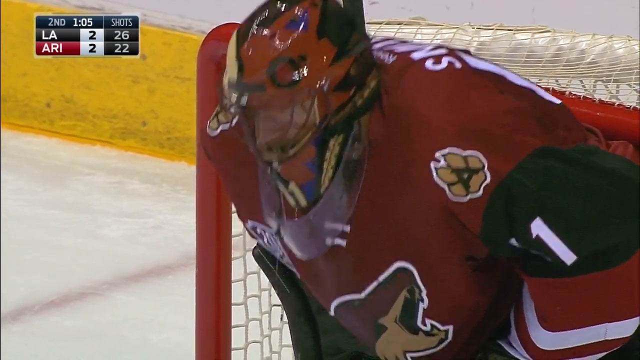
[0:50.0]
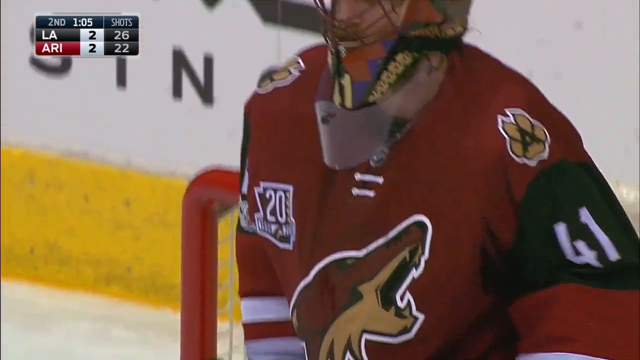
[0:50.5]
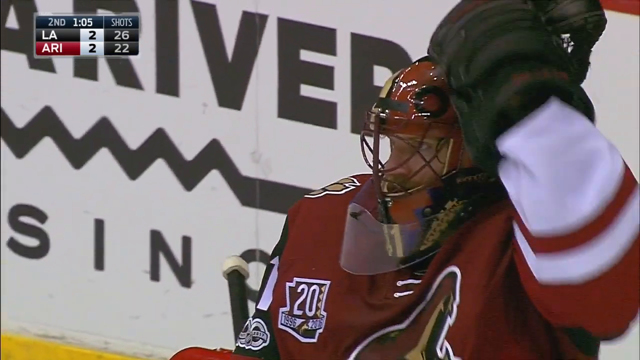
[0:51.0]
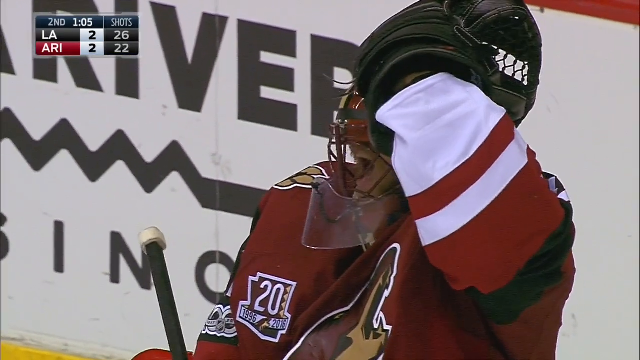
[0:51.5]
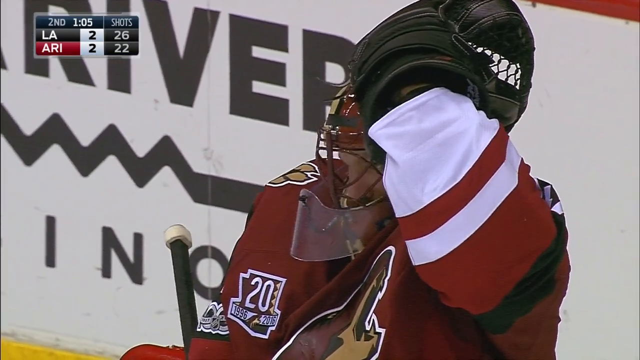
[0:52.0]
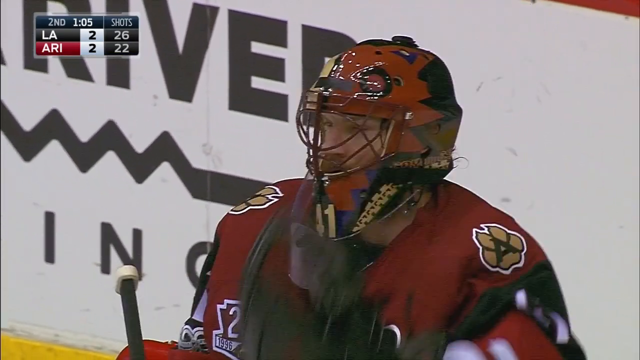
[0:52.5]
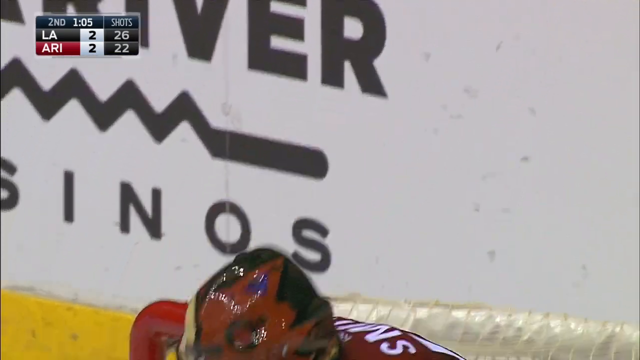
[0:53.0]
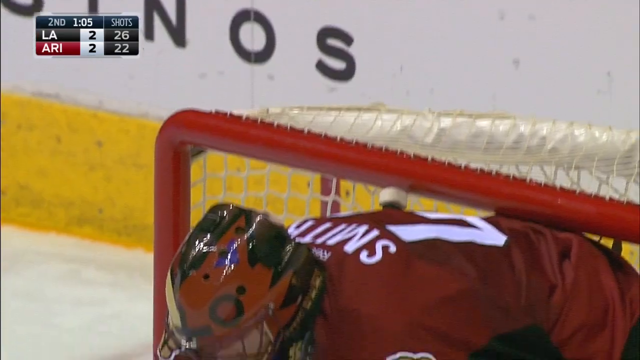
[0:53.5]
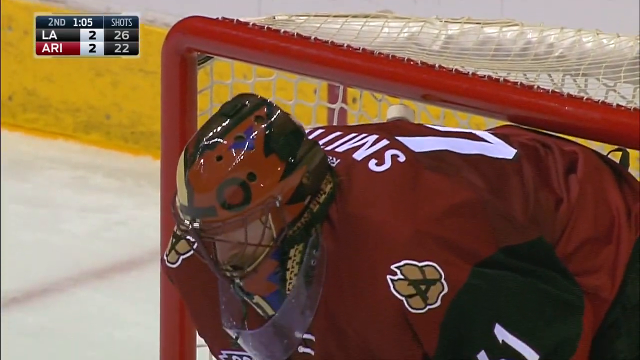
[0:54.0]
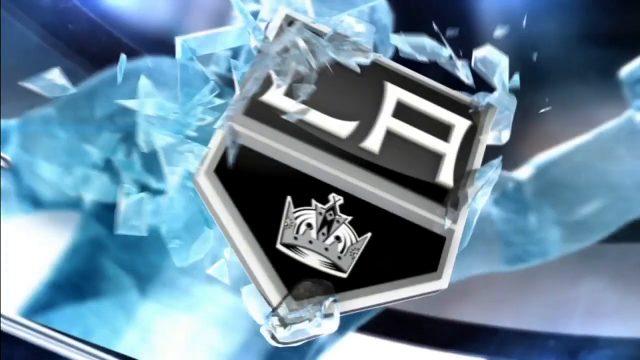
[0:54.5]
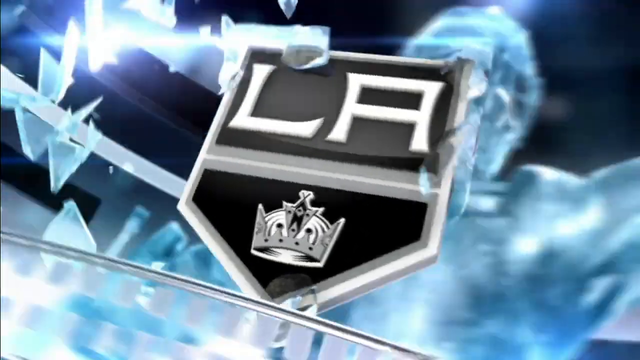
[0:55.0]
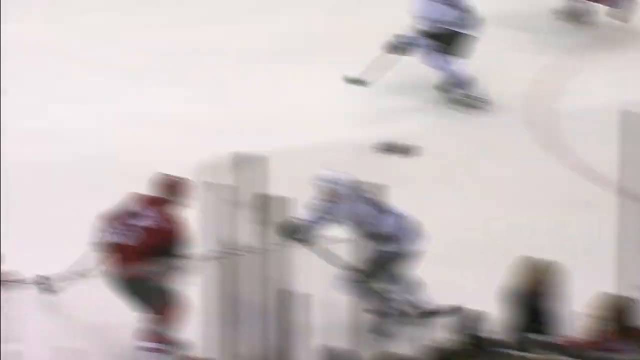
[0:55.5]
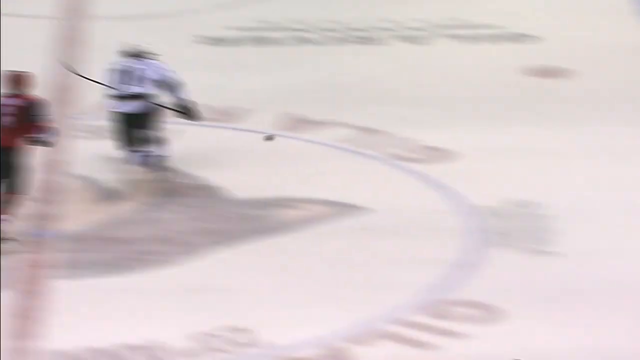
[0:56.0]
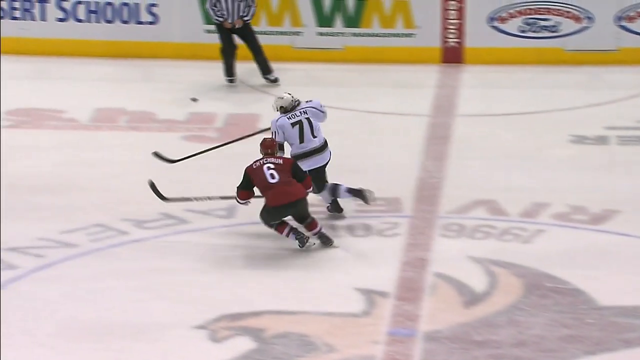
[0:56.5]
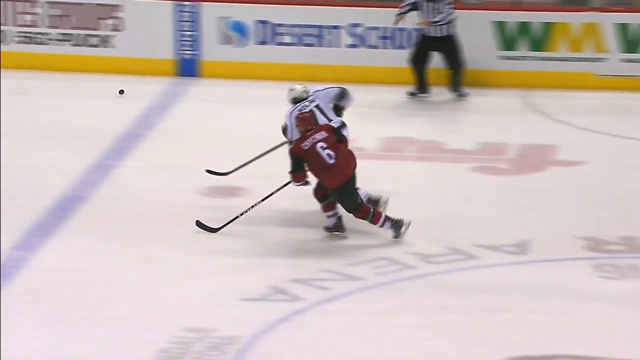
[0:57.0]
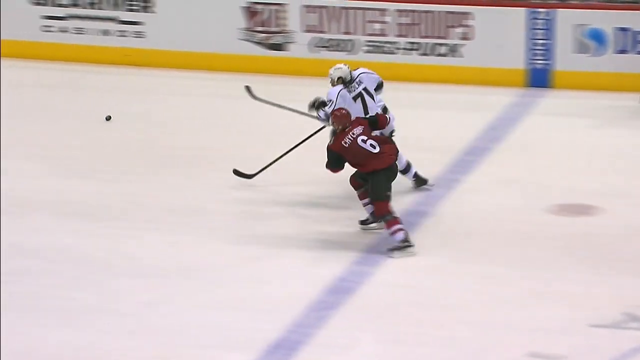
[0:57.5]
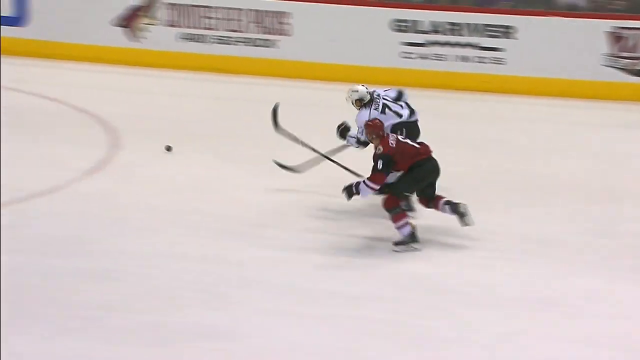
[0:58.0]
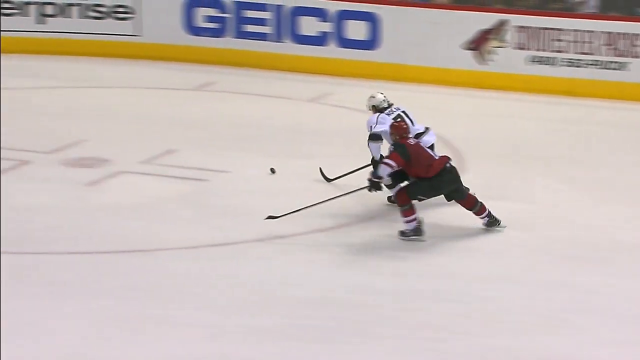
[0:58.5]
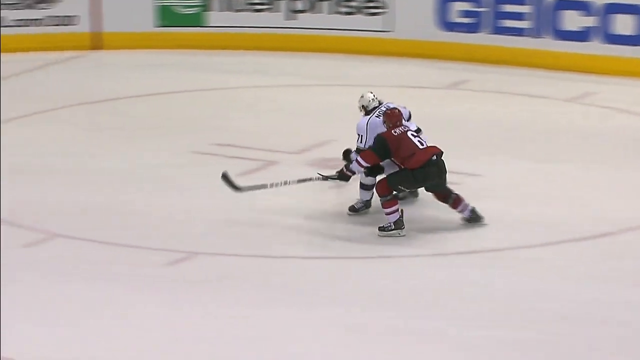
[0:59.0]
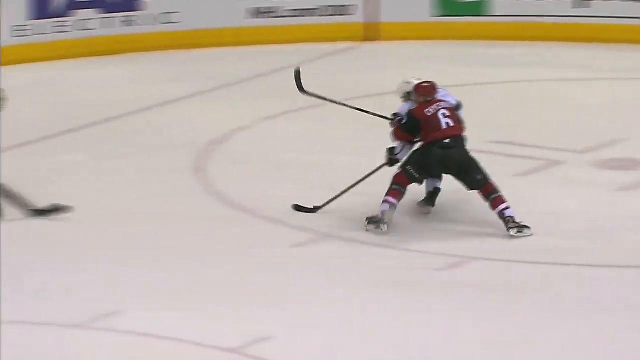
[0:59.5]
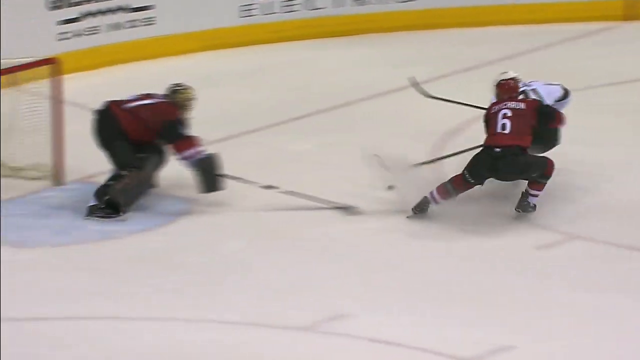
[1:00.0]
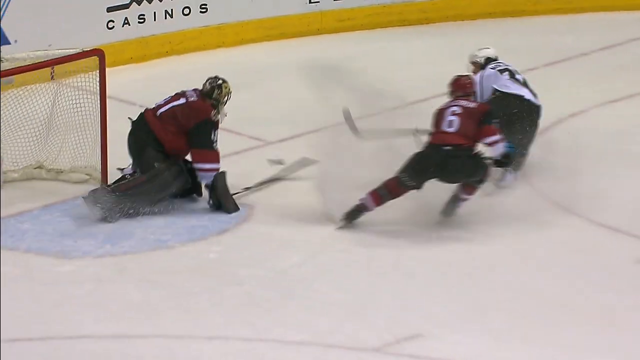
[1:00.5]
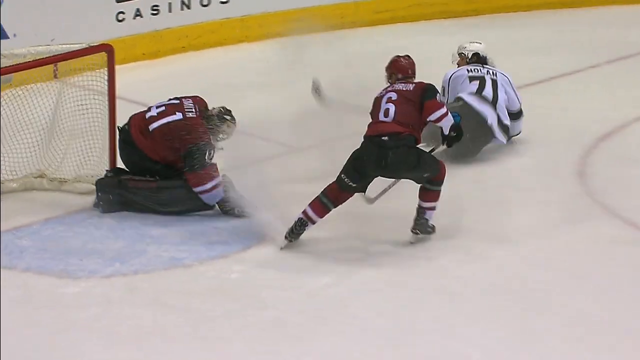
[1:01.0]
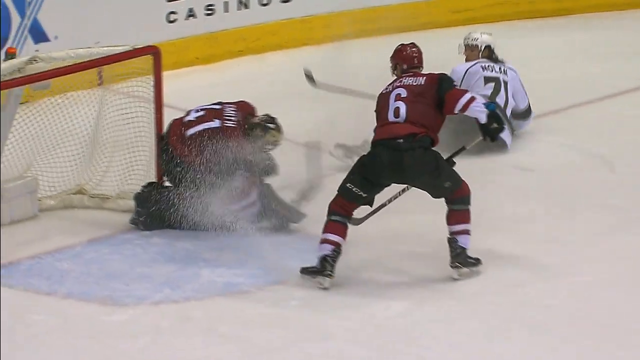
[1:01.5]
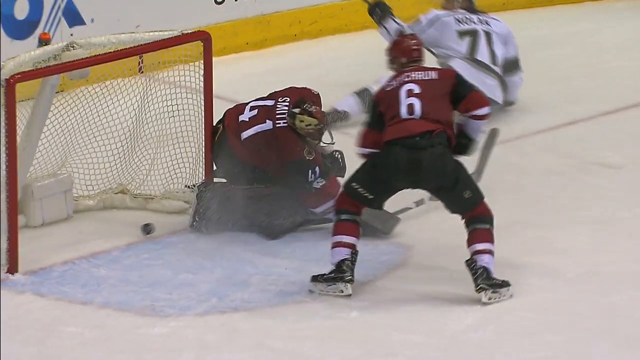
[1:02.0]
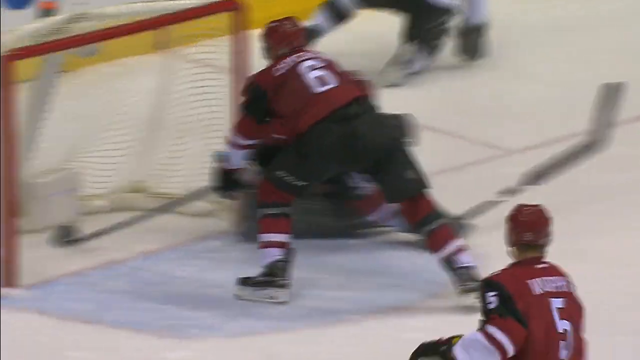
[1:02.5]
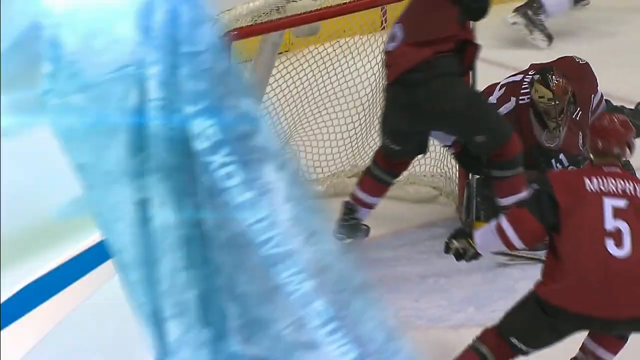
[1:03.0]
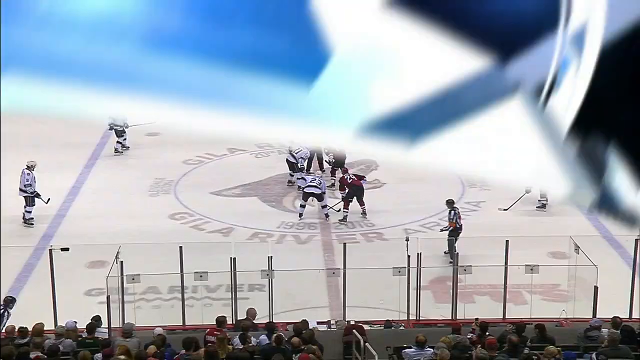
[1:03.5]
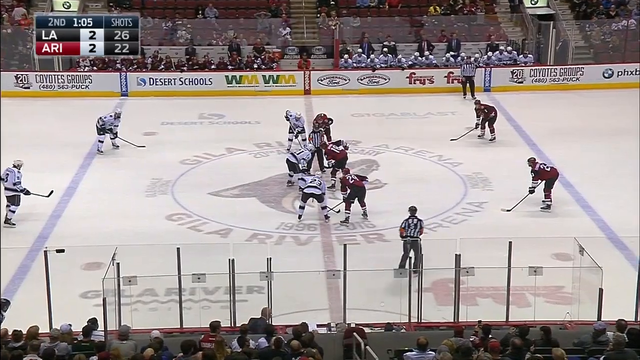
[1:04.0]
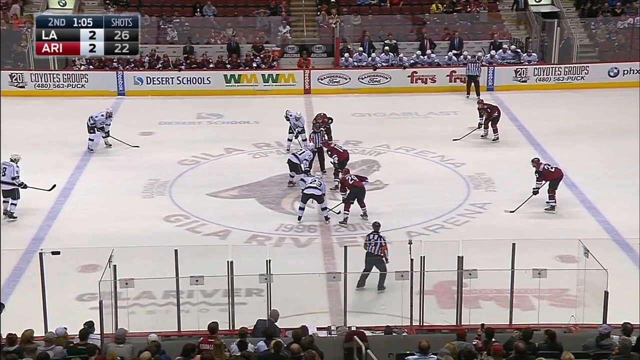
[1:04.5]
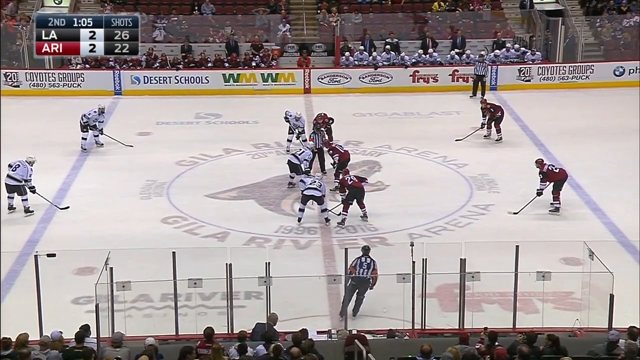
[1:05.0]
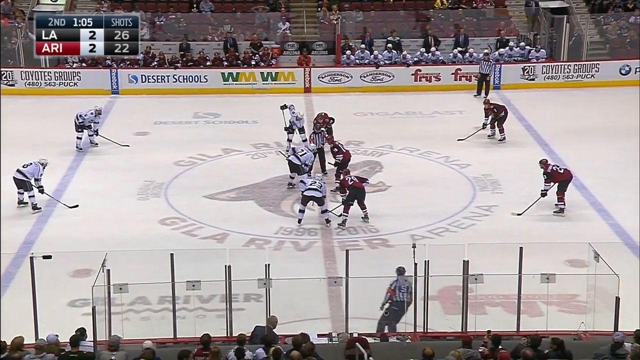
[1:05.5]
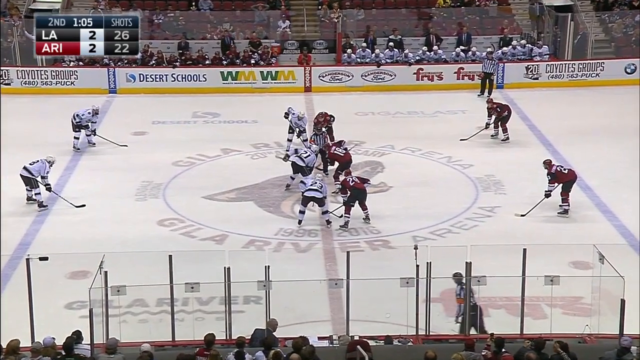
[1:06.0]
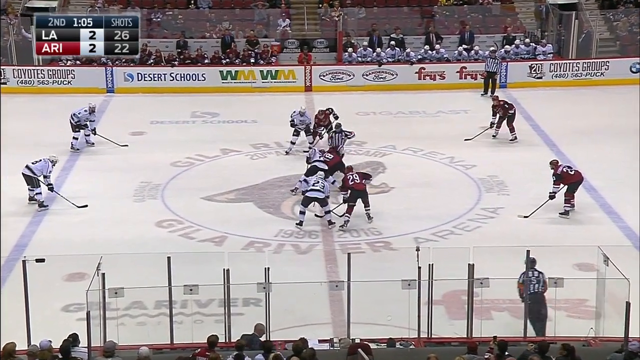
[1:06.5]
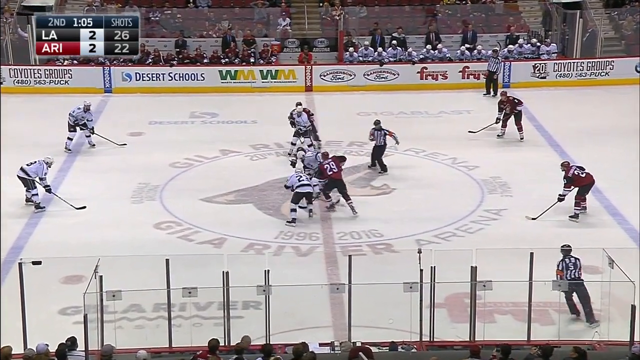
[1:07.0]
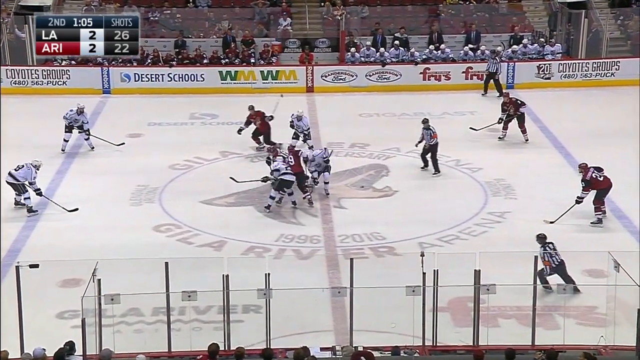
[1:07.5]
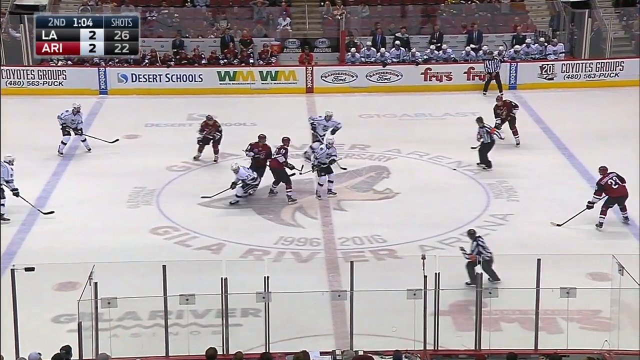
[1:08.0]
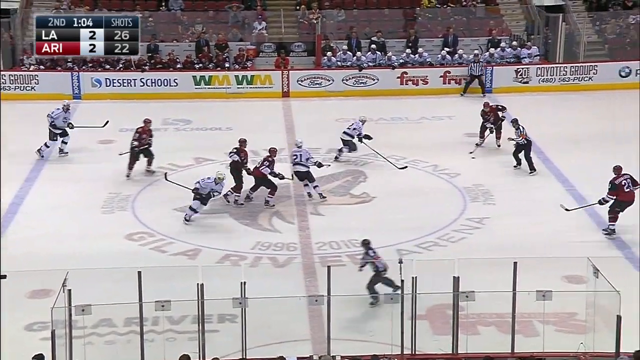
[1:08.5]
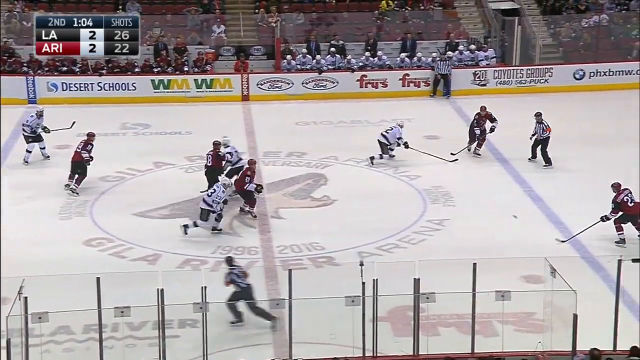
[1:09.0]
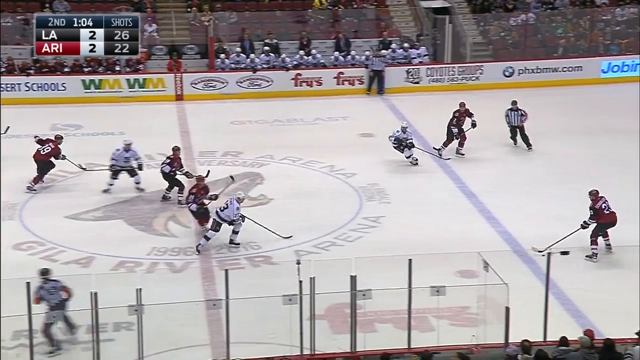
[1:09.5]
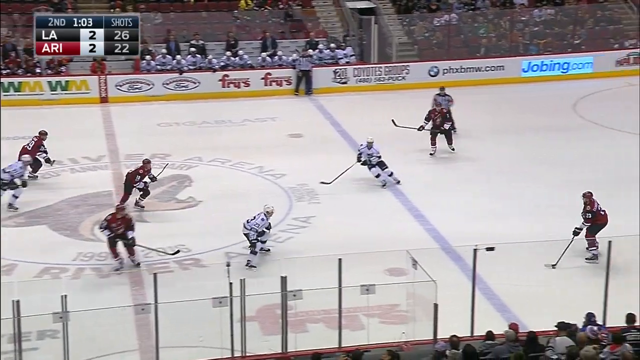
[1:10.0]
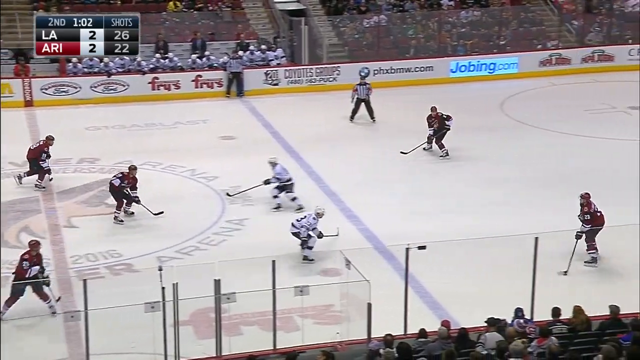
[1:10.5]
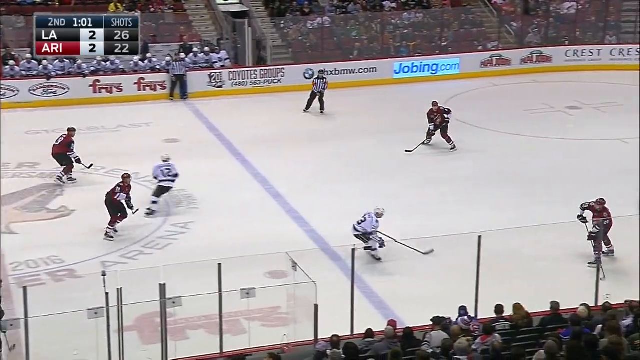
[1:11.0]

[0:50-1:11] Both teams play actively, with the focus on the white team fighting the red team; they run very fast, and the white team scores when the goalkeeper on the red side falls down and the ball passes through. Afterward the players are shown worn out, and the red goalkeeper is in disbelief and sweating. The goal is then shown multiple times, step by step, and the start of the play is also replayed, with all the players starting at the centre. There are many people, all wearing skates and all active.